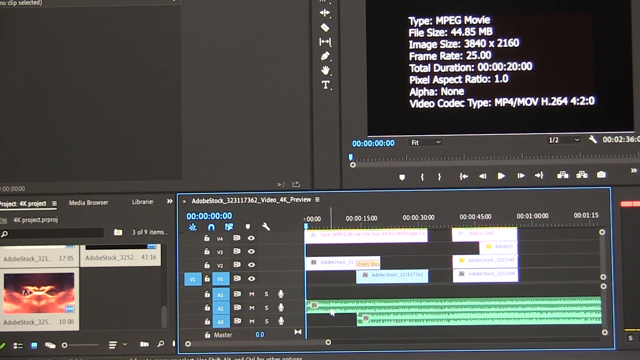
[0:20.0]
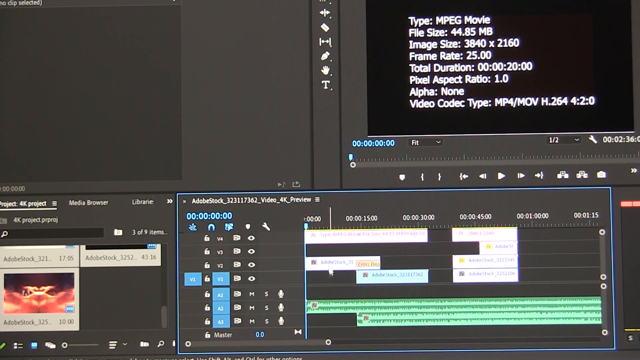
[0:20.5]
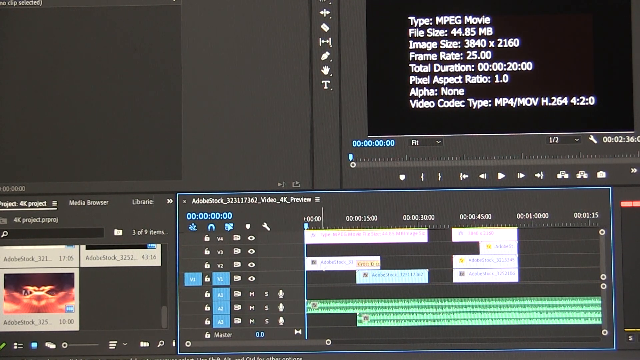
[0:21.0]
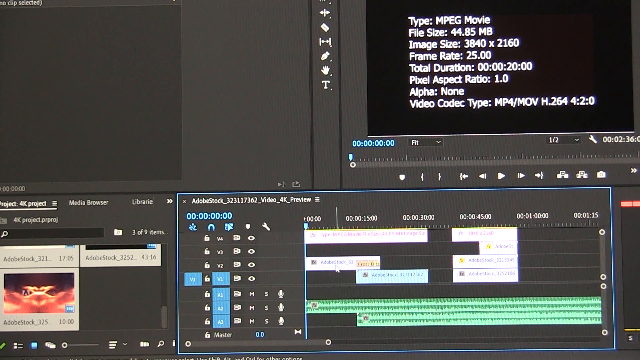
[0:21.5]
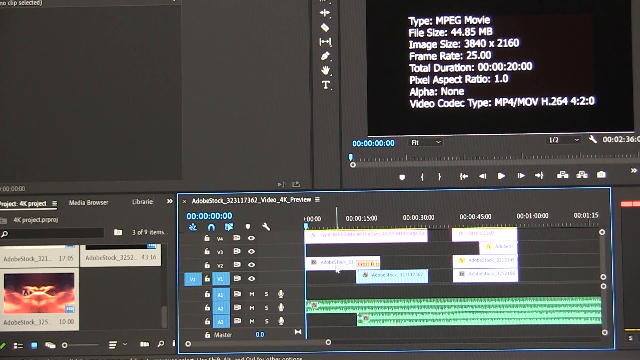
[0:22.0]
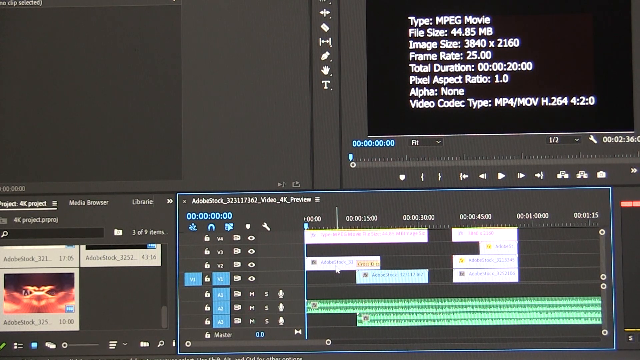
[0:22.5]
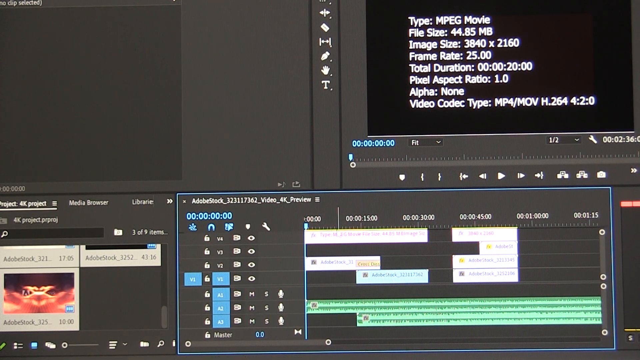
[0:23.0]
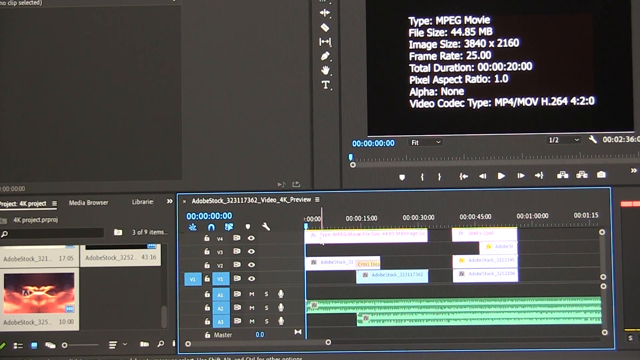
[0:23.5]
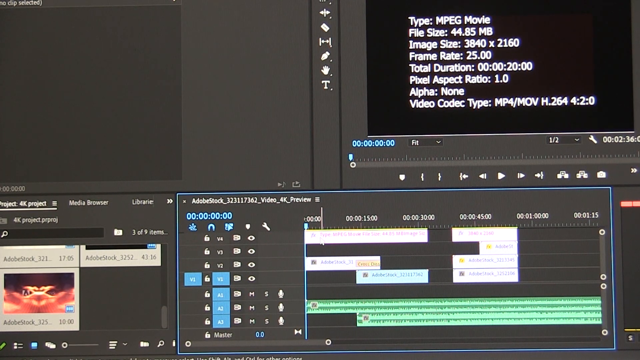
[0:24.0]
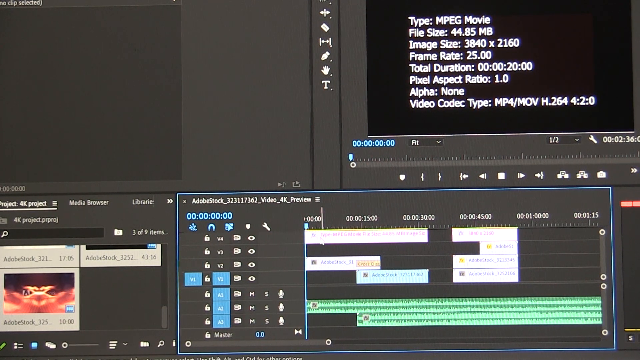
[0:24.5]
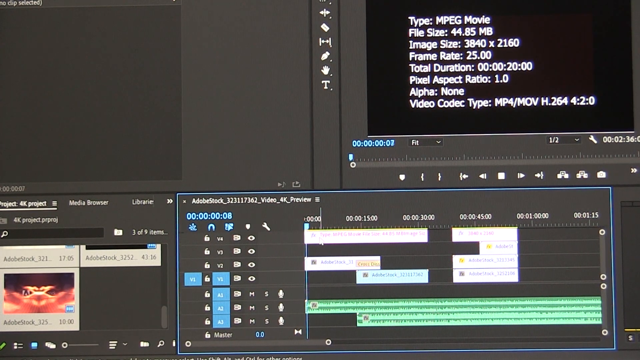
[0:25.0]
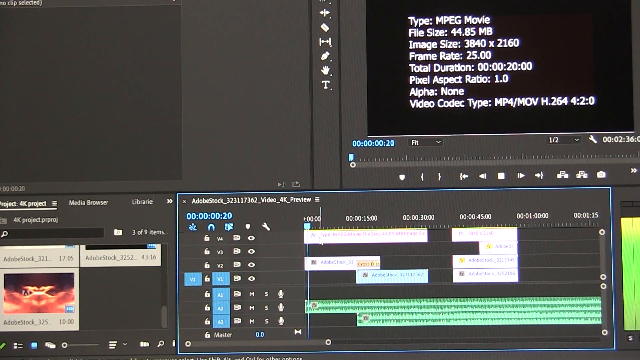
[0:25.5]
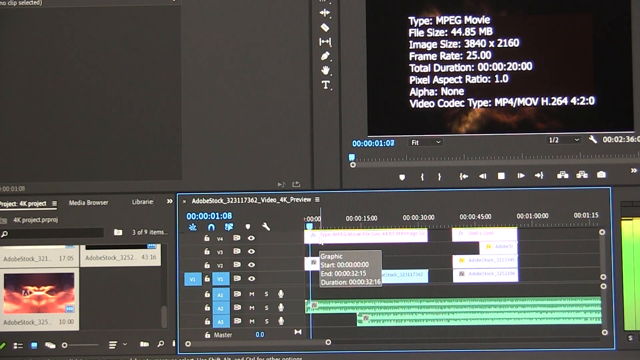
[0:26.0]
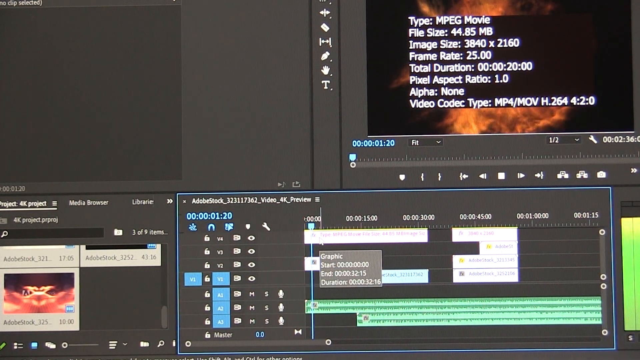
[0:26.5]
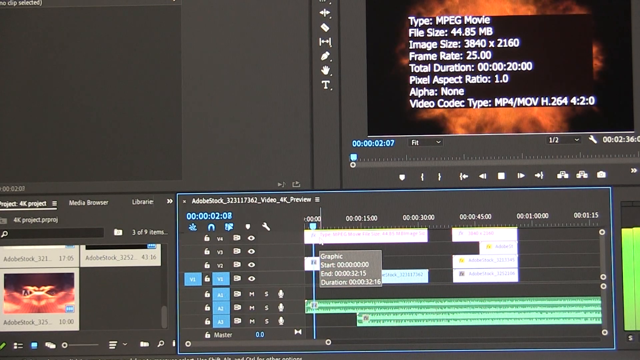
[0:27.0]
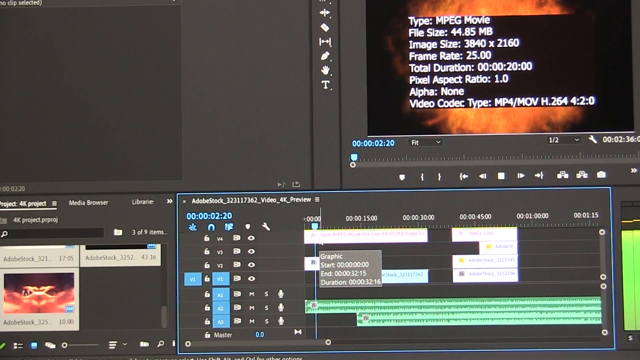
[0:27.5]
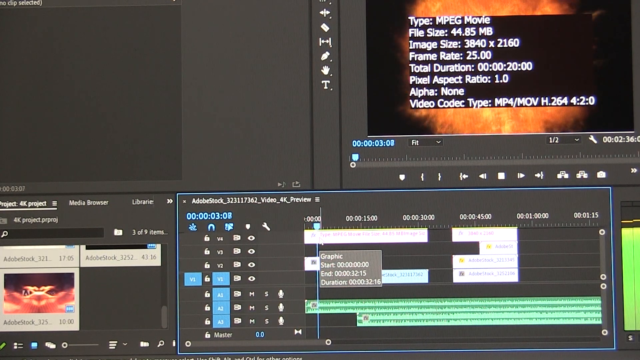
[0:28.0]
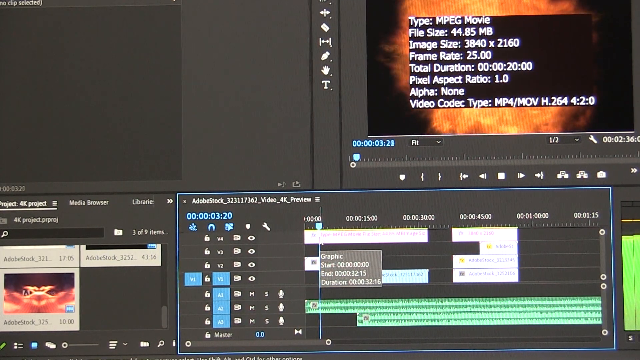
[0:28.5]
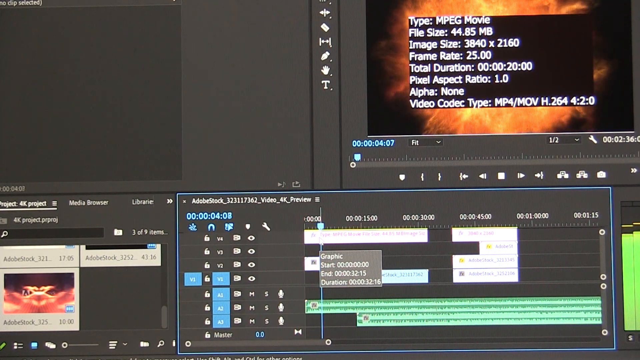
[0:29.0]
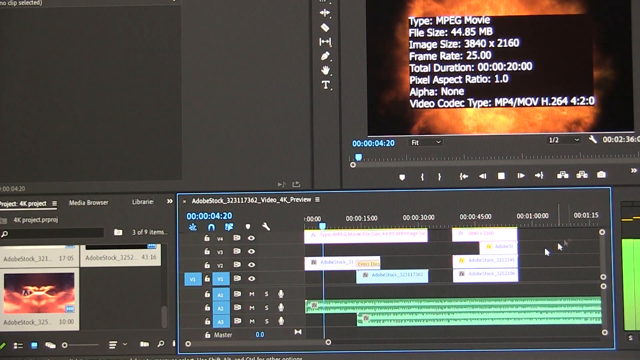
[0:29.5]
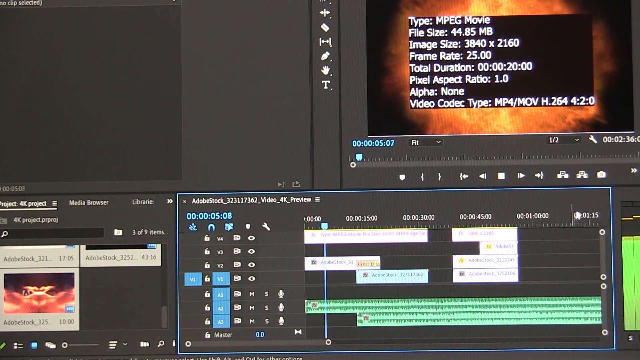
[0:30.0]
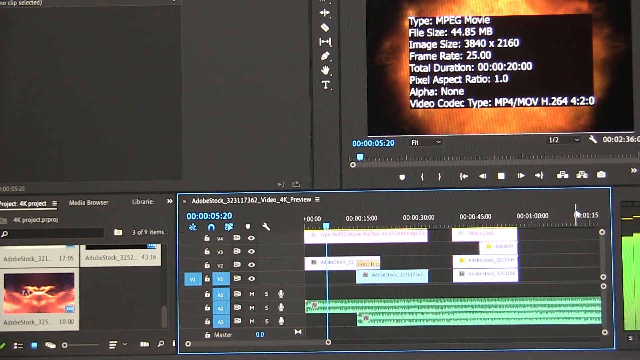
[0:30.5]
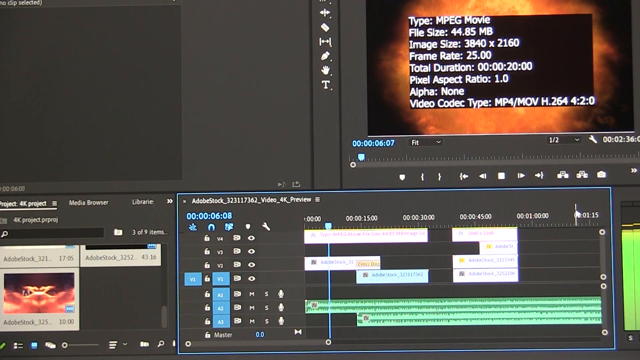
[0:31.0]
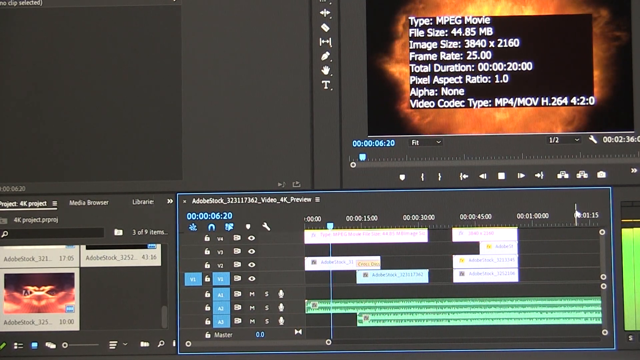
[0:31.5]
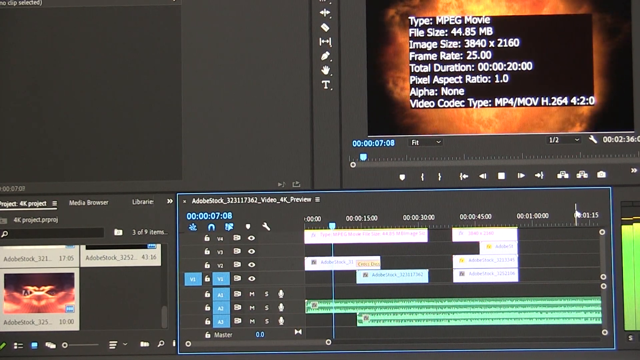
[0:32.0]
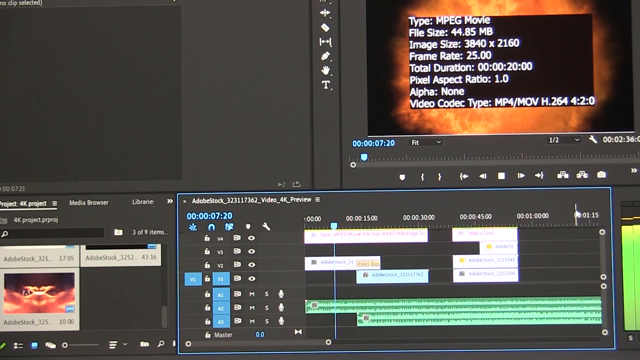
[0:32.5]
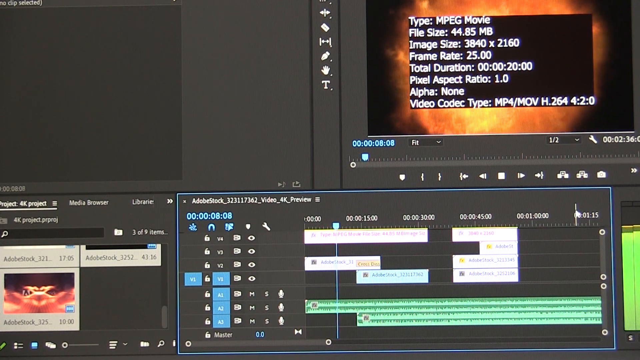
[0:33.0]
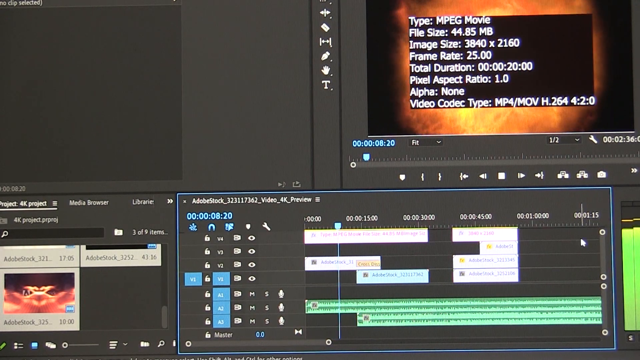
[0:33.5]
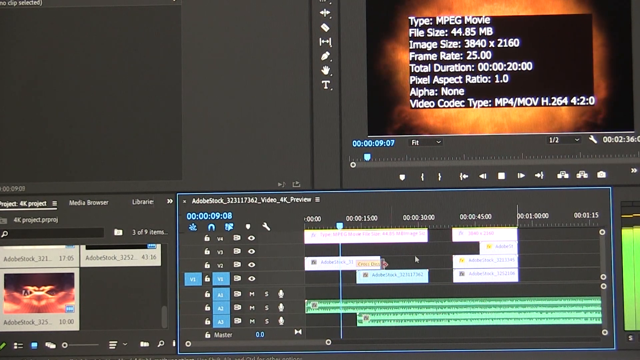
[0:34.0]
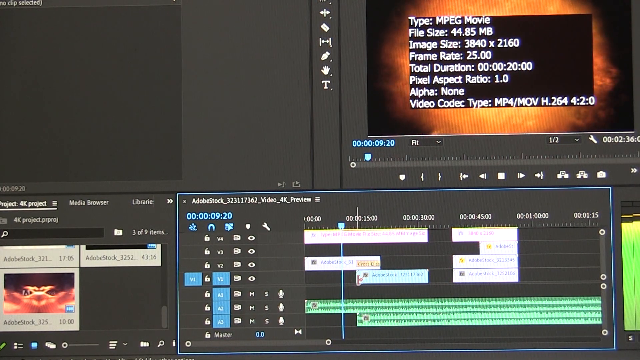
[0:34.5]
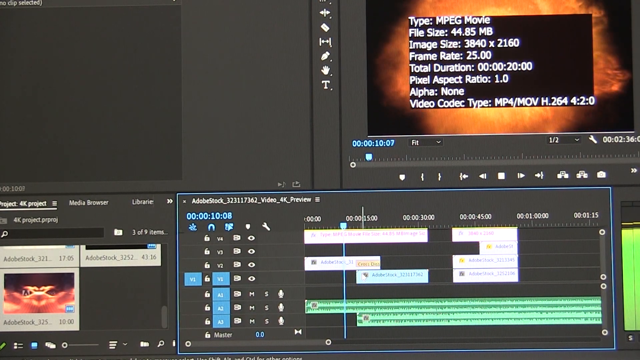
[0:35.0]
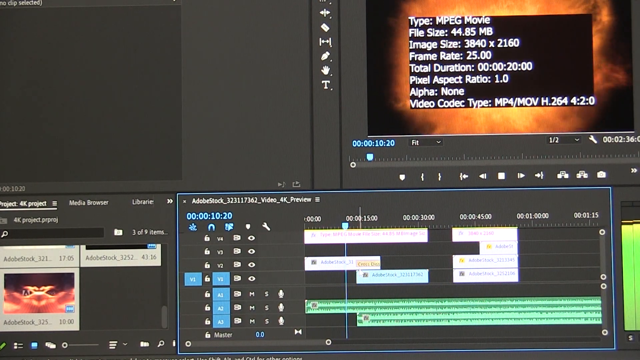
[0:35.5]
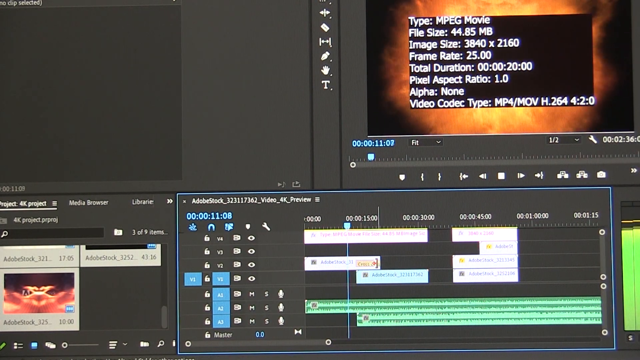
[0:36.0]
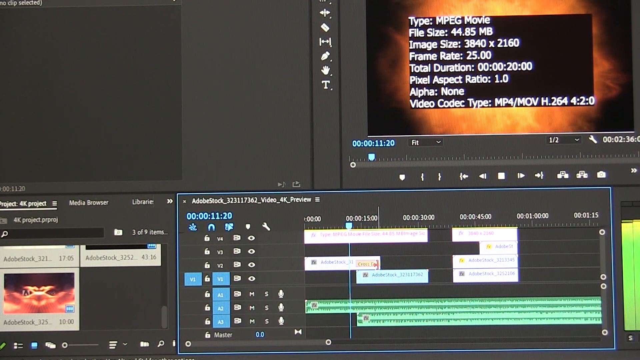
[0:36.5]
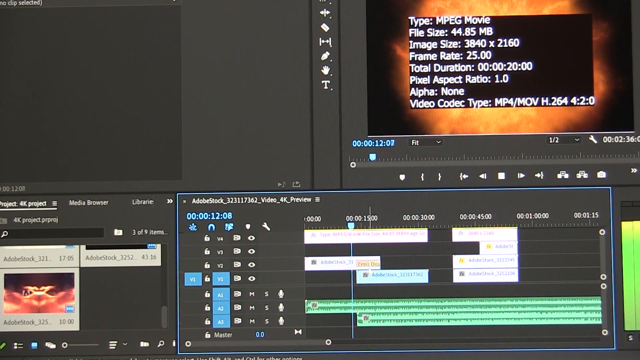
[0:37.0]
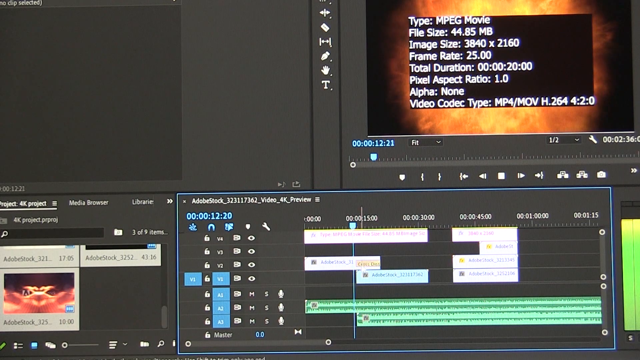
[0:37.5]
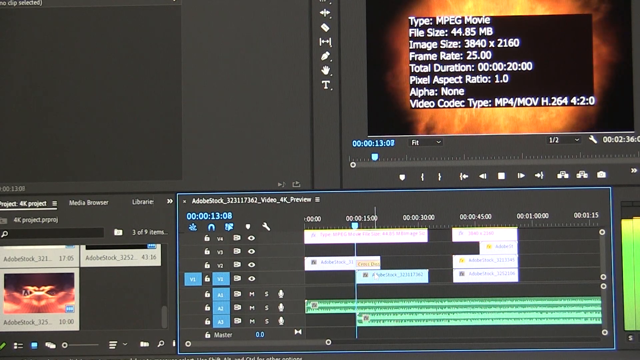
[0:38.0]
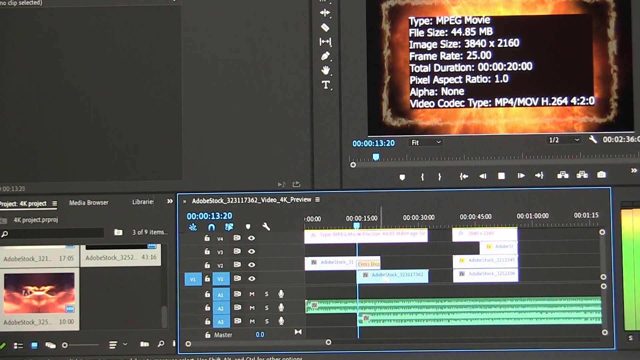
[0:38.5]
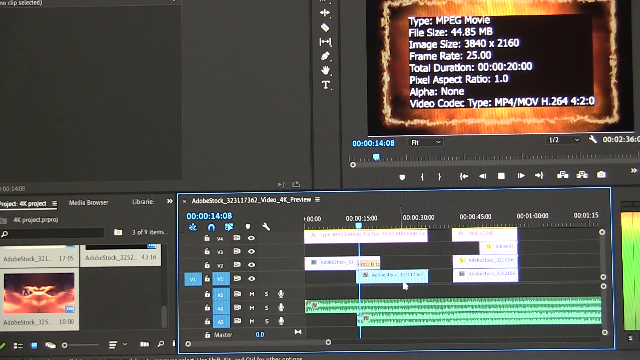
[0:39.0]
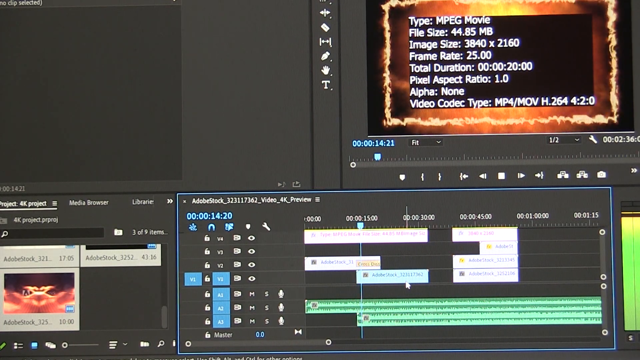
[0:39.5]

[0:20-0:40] In the video editing software, the user plays a video of a flame on a fire background. A sound level meter moves up and down, and the work area shows what he has worked on, with the view apparently moving from left to right. The flame's layout changes: initially it is round, and it changes from a round to a rectangular shape.